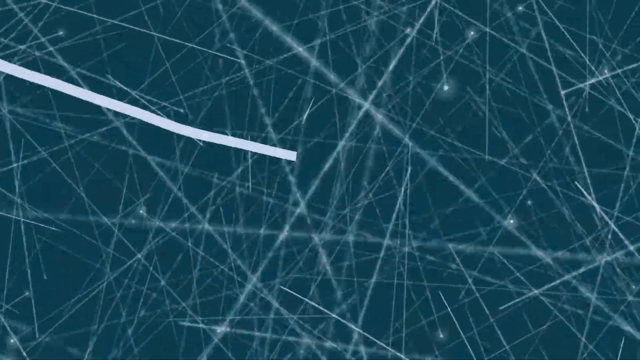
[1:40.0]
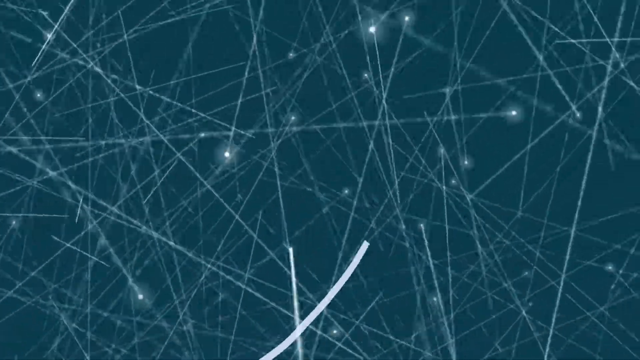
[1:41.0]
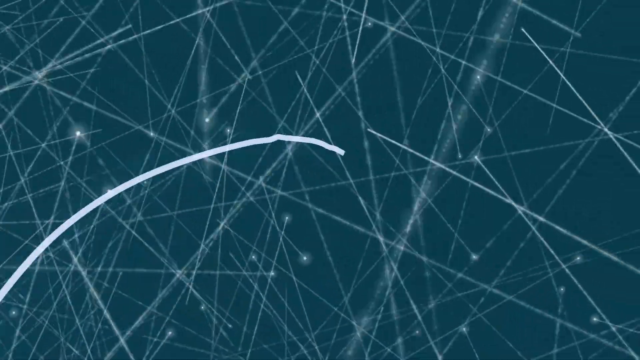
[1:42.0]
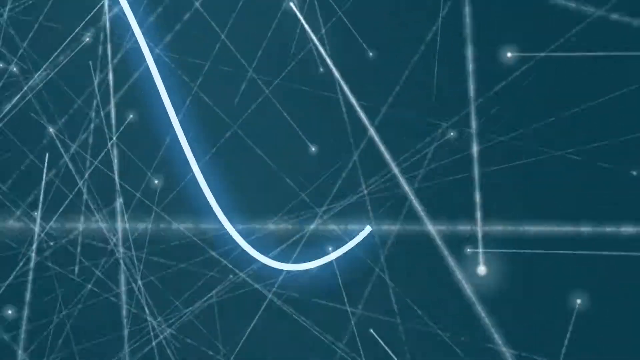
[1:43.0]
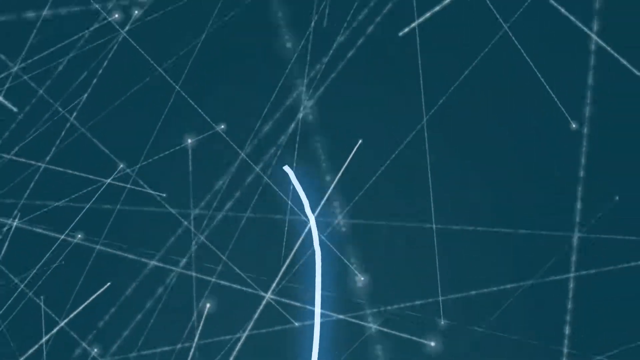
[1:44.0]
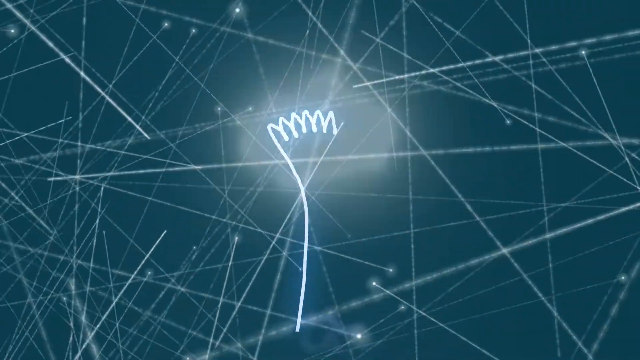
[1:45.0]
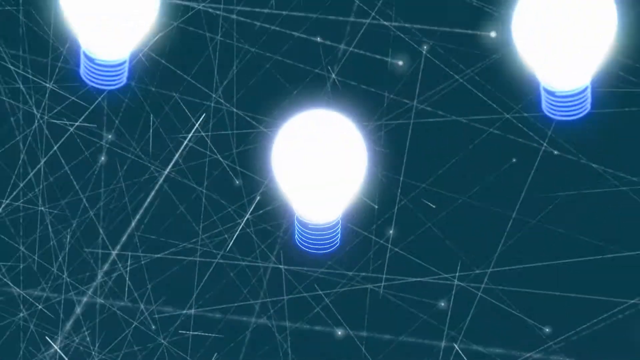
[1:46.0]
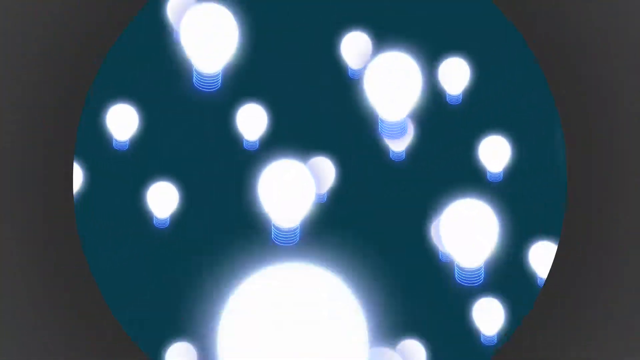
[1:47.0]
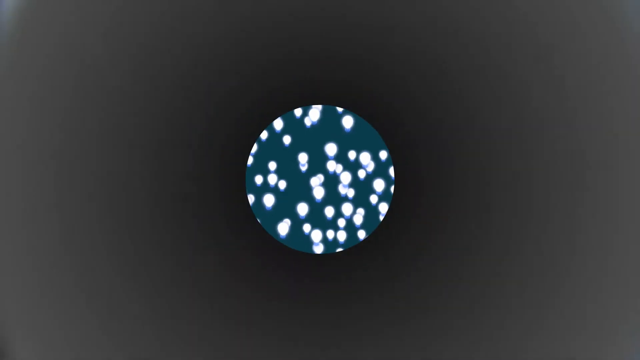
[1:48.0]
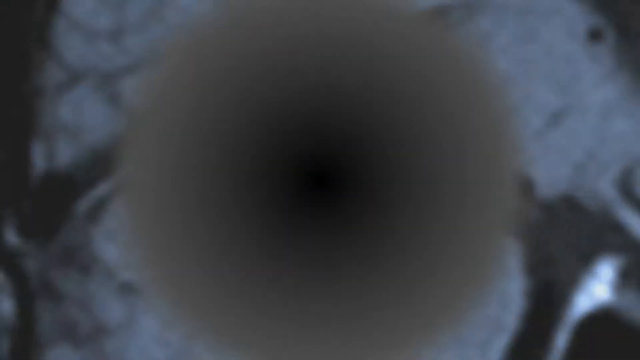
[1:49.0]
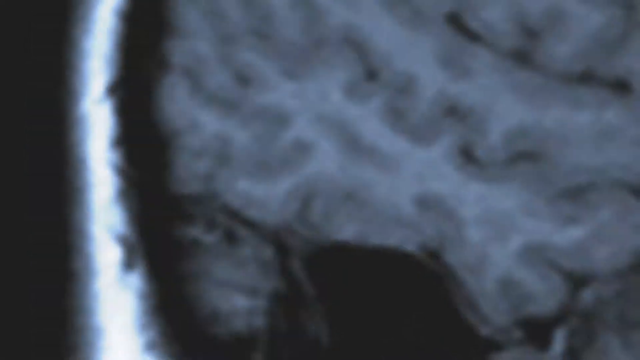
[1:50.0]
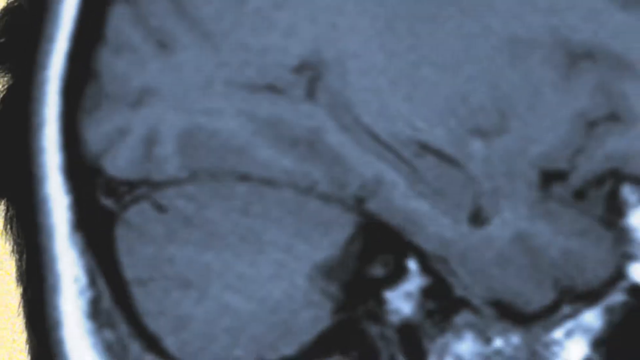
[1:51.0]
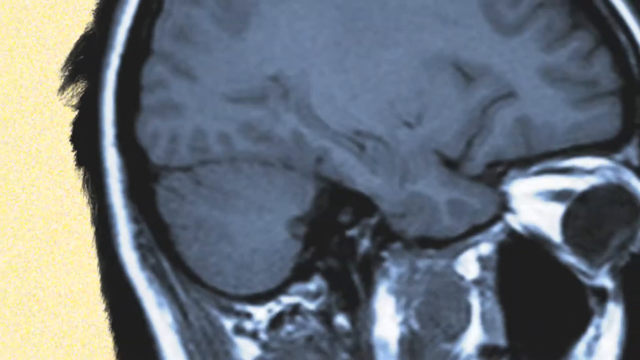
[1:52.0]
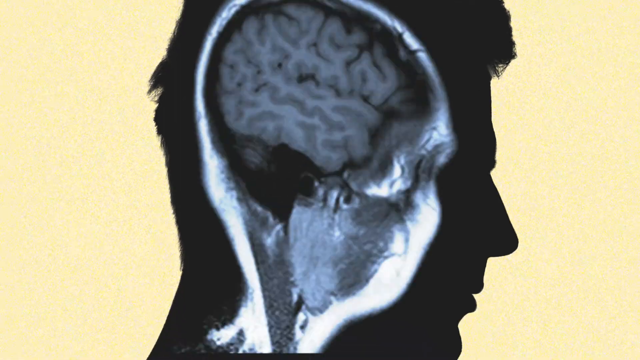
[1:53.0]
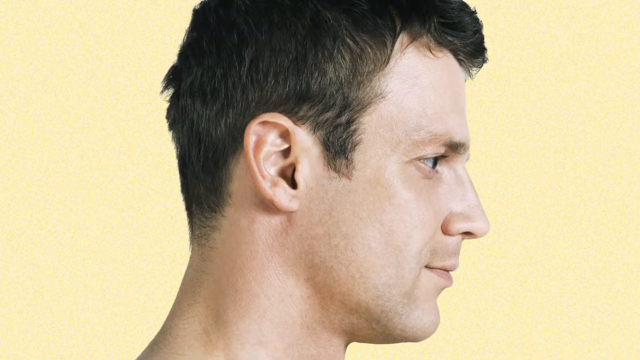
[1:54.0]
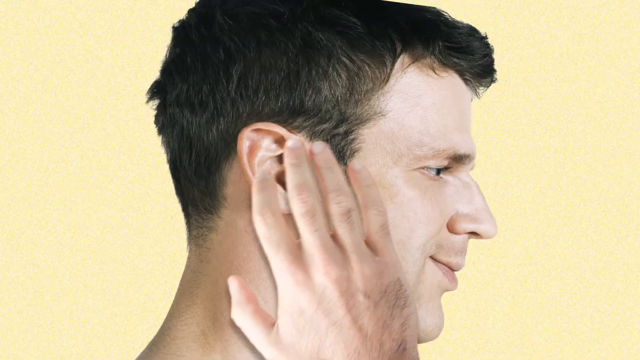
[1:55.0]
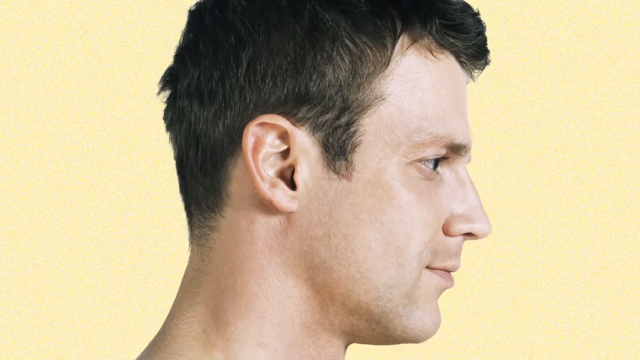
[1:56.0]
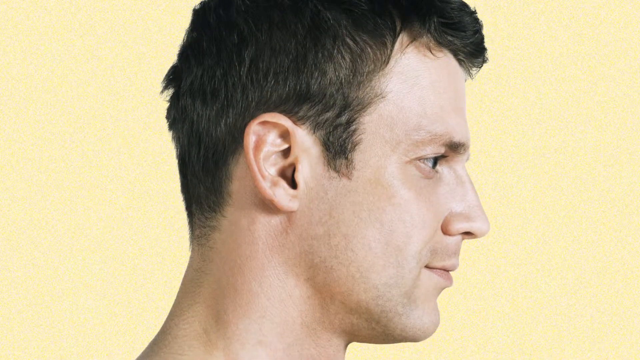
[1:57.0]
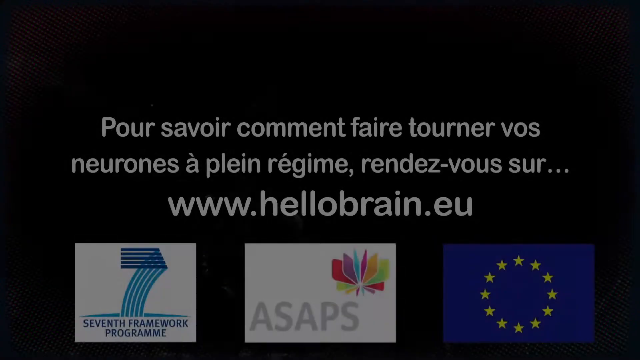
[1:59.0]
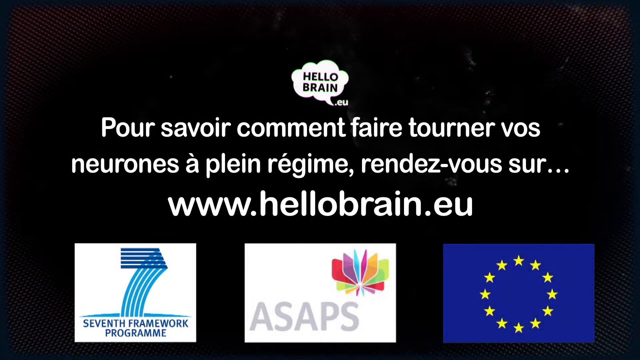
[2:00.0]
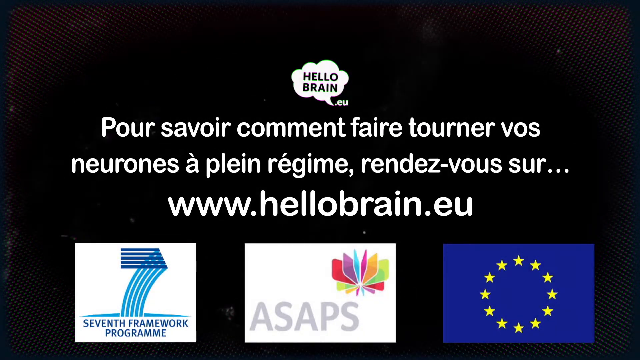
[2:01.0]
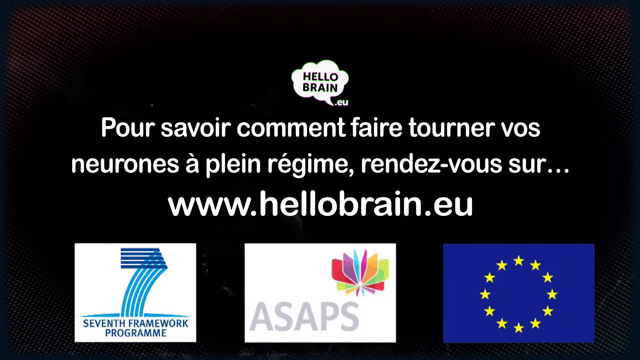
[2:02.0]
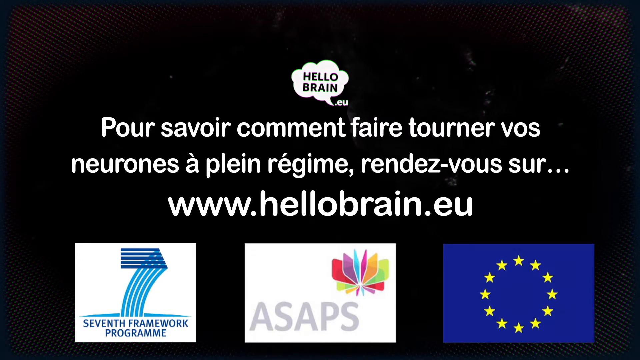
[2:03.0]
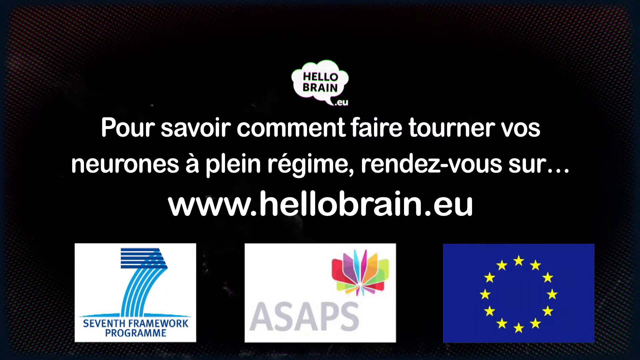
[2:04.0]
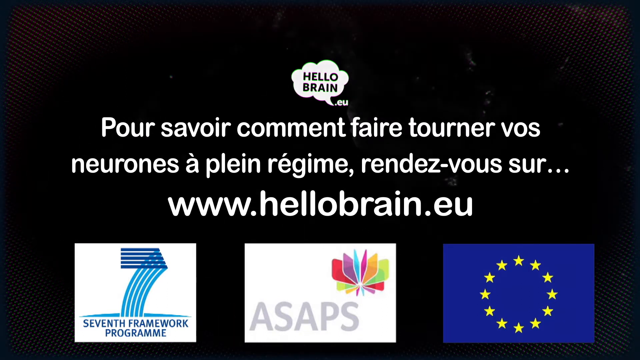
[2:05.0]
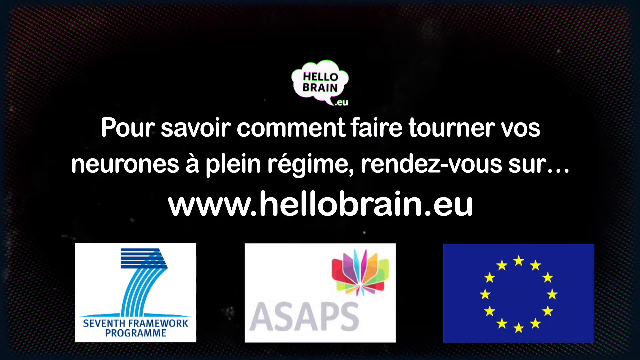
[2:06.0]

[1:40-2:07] The video continues to show the brain and the inside of the brain, with something like thought spiraling around and turning into light bulbs. A website is shown that says "hellobrain.eu", and there are many light bulbs. A white-skinned man rubs his ear.